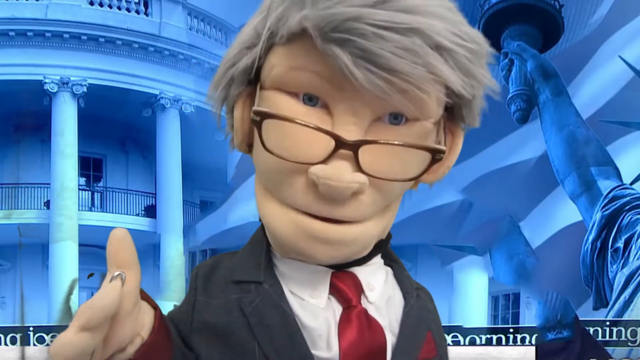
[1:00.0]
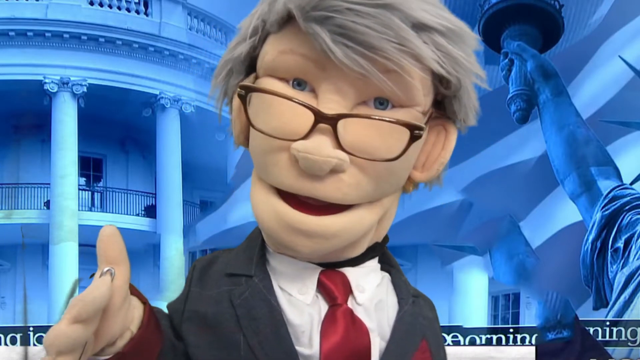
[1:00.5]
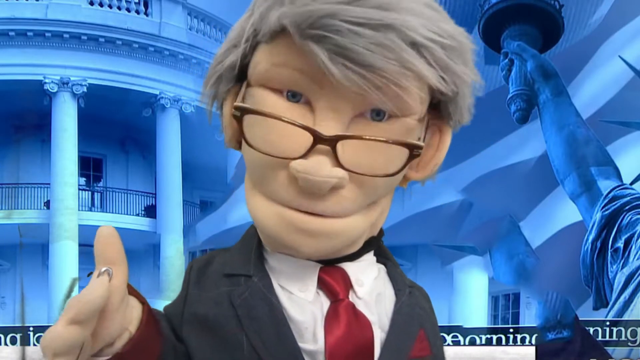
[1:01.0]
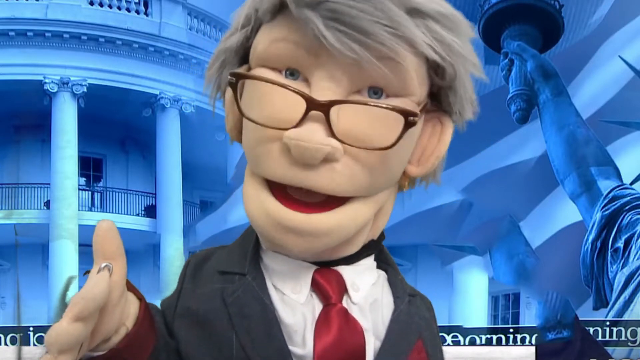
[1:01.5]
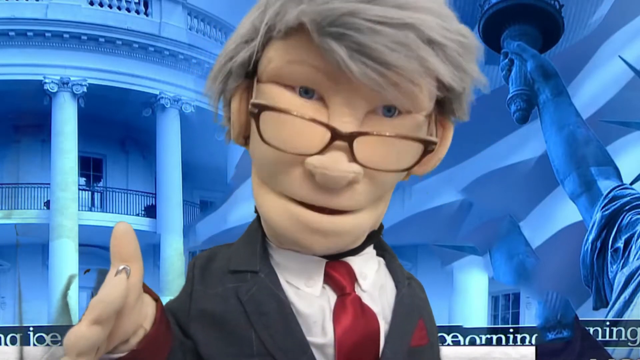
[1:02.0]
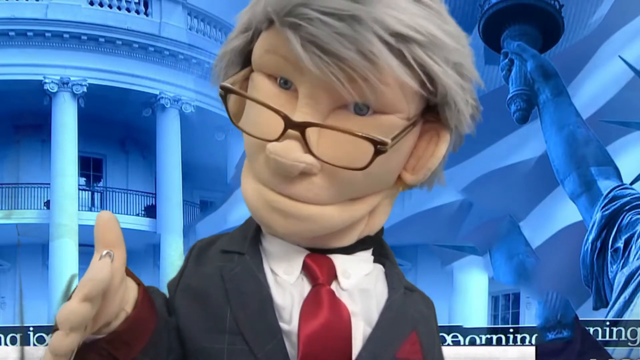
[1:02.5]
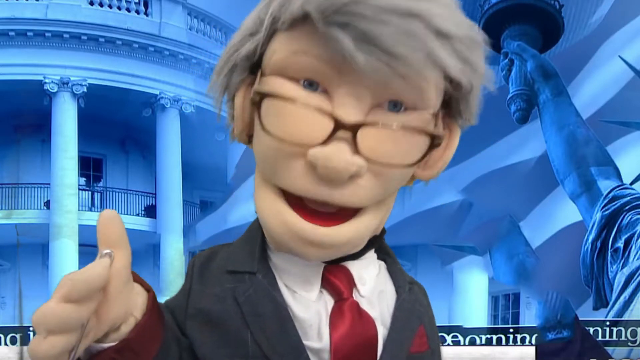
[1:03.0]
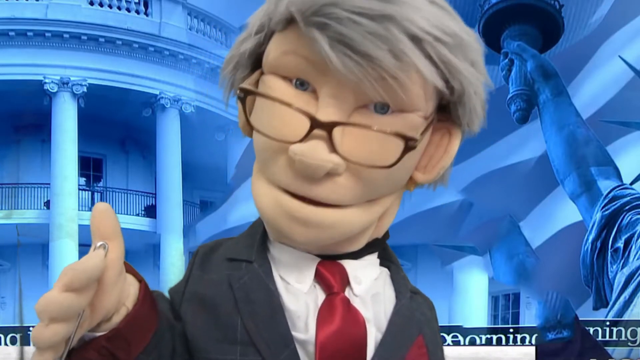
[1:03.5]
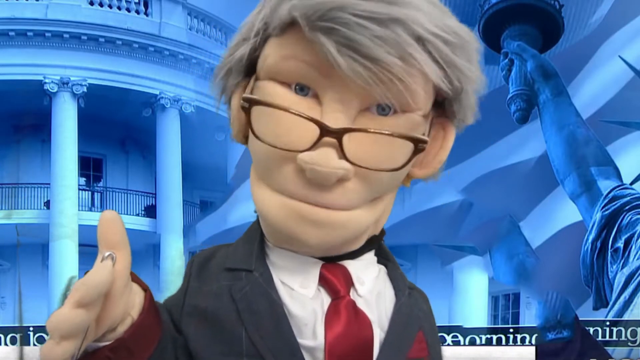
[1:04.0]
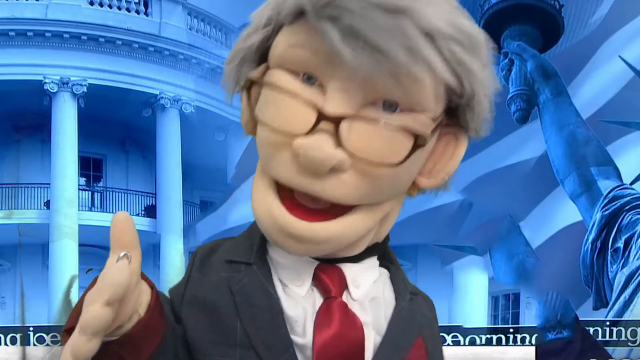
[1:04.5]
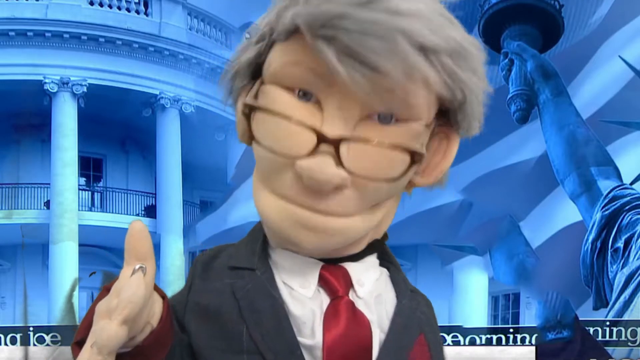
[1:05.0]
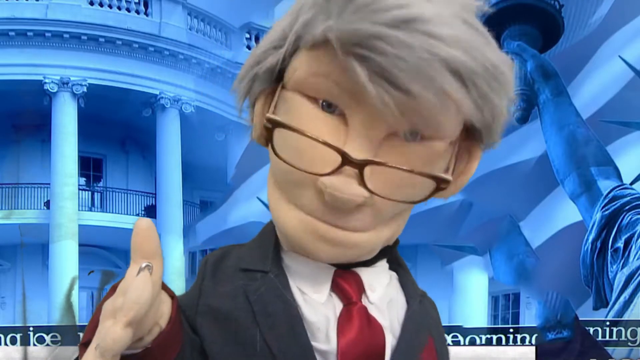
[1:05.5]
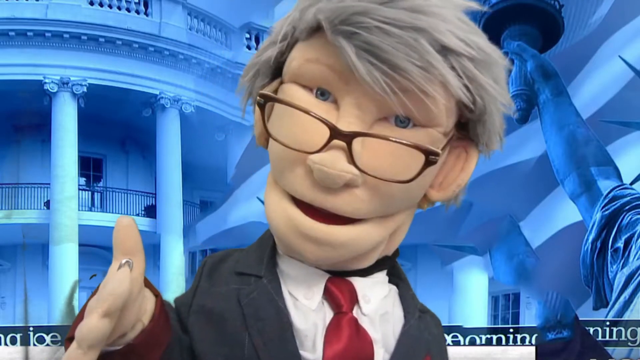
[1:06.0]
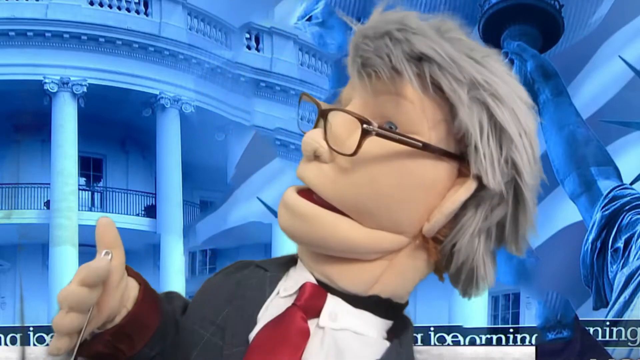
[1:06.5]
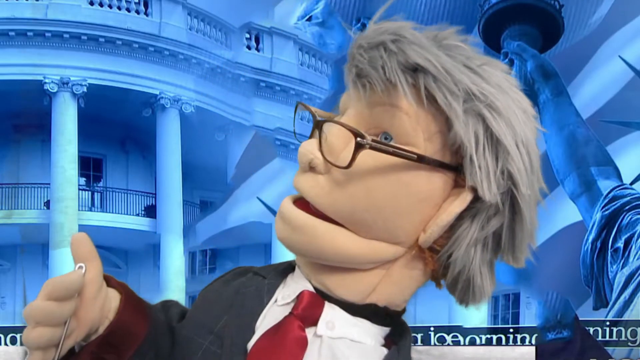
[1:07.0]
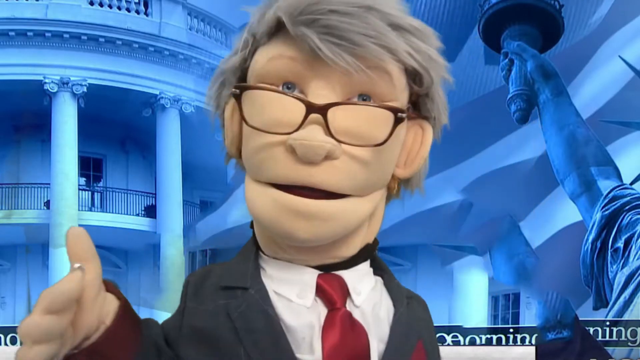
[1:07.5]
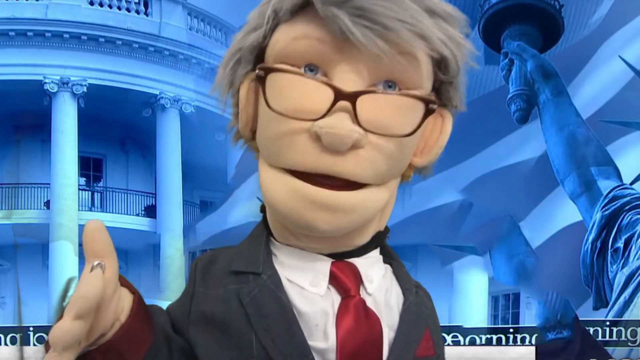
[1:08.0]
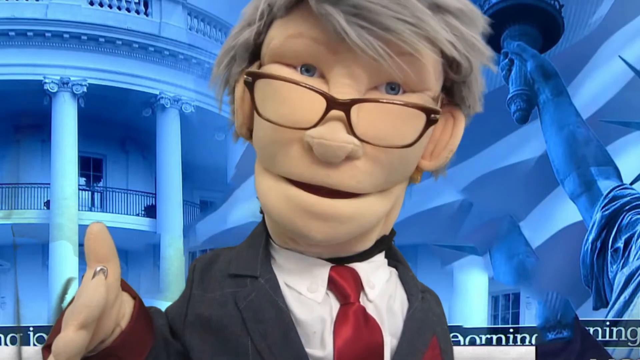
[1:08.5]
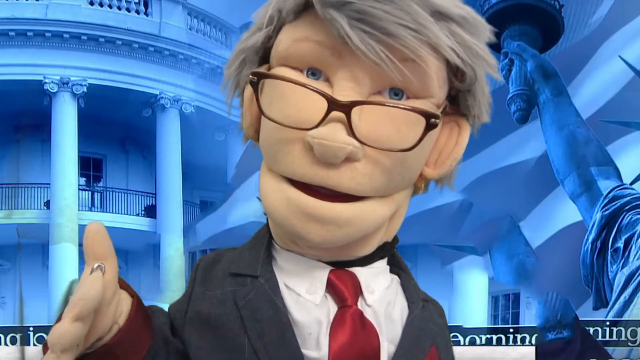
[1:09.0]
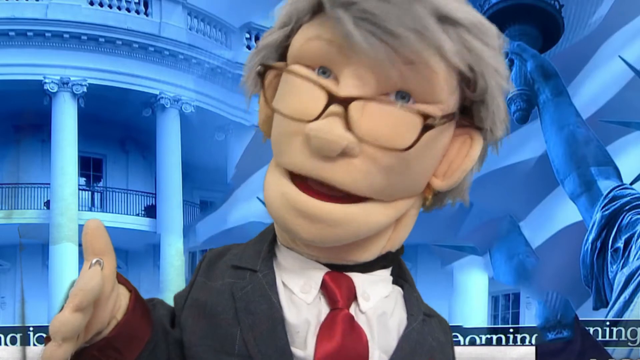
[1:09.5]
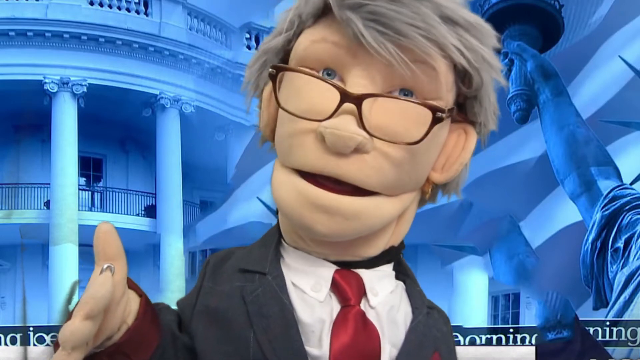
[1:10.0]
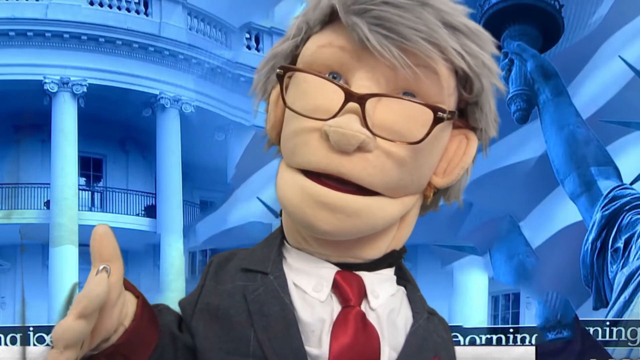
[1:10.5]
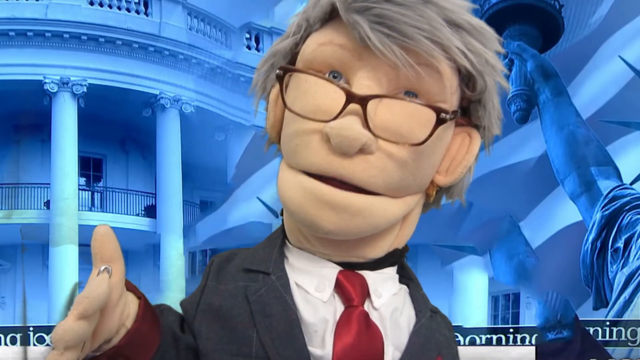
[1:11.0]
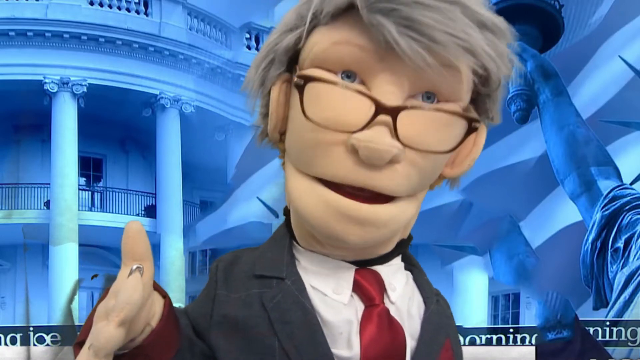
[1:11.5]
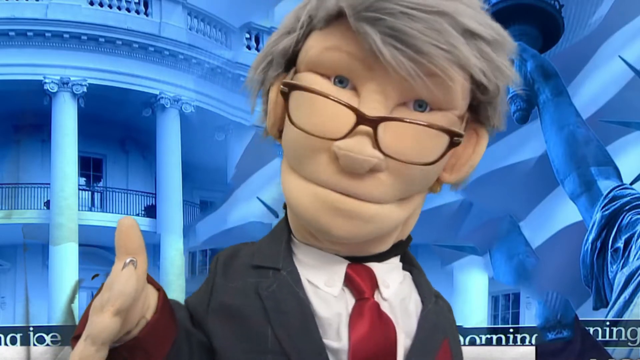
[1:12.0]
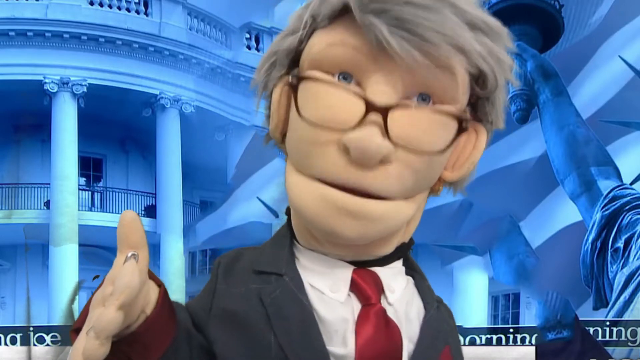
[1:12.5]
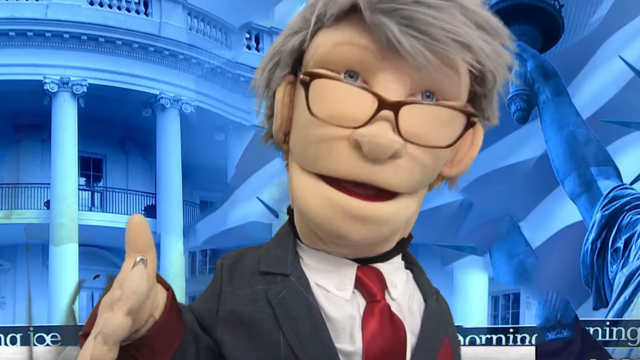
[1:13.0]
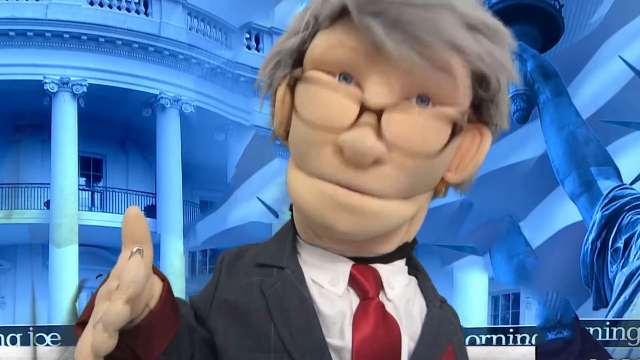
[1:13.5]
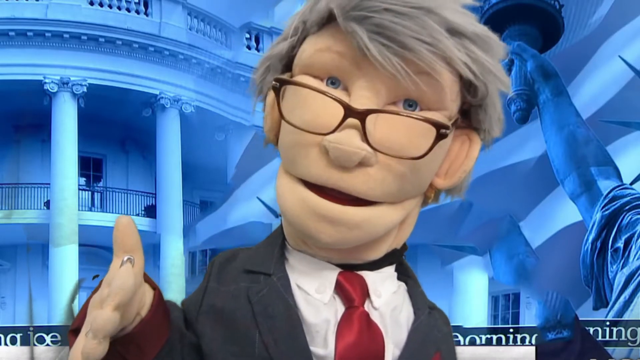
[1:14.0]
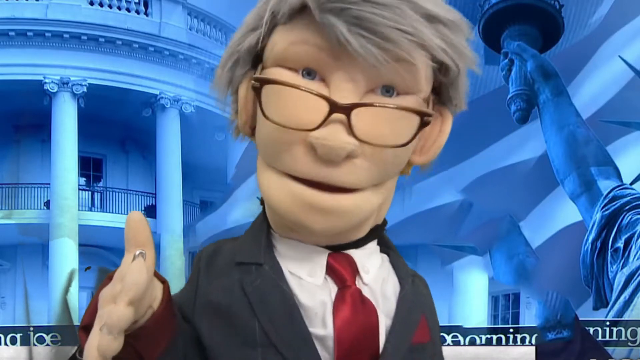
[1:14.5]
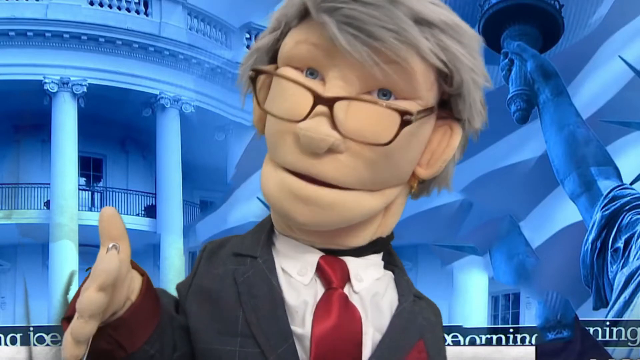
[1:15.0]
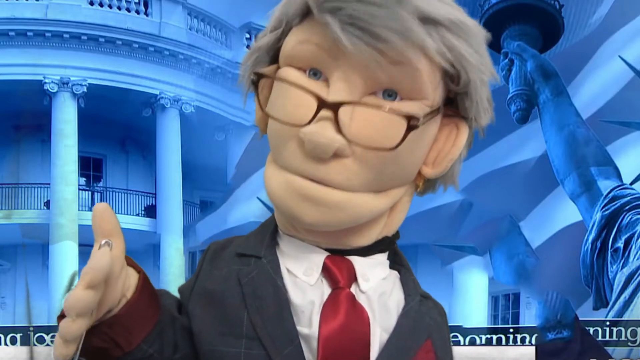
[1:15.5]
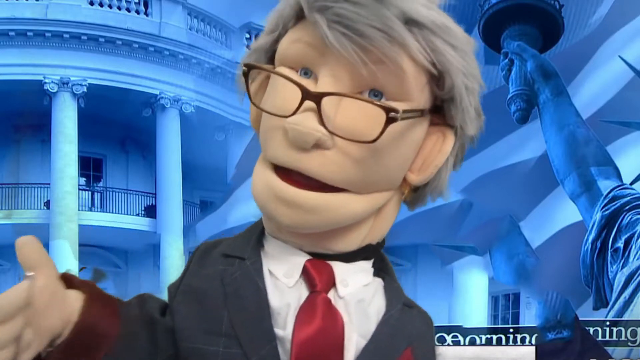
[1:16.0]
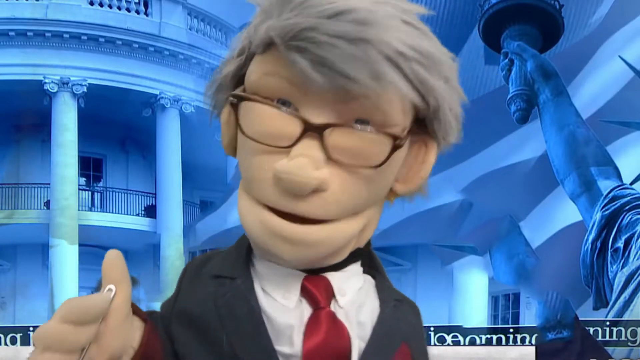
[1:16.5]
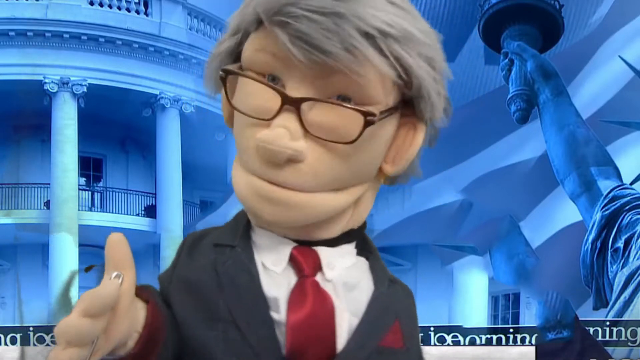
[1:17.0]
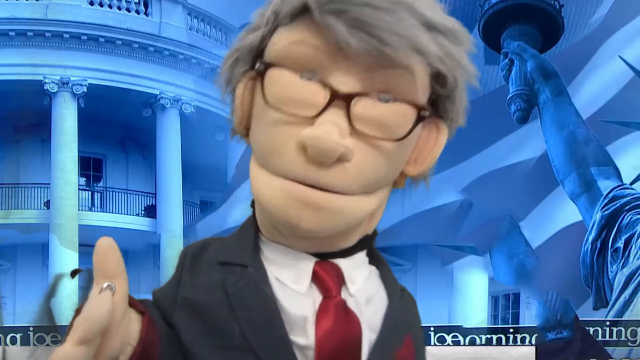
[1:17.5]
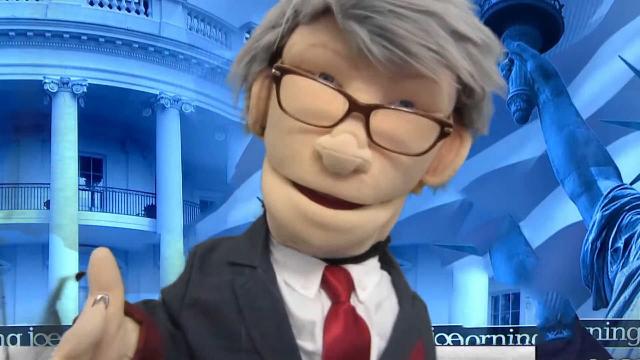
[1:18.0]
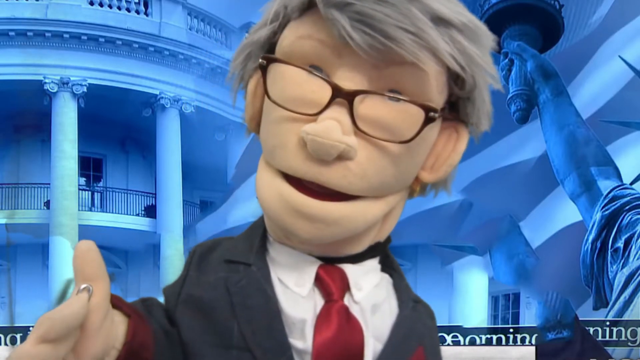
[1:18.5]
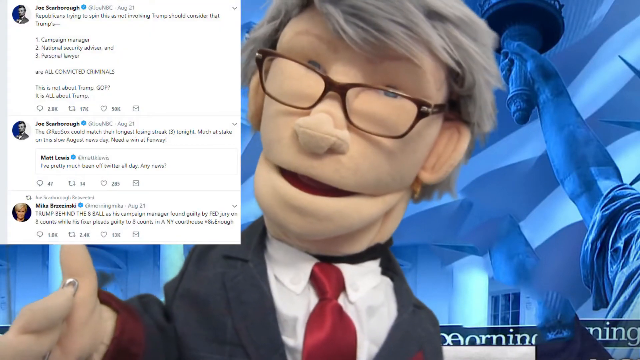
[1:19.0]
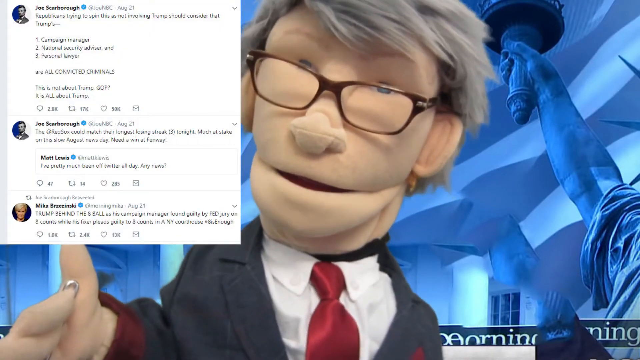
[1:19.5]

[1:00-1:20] The Muppet talks directly to the camera and looks in different directions. The Statue of Liberty is in the background. On the left-hand side of the screen is a comment section with many comments from different people. He wears a suit with a tie and looks formal and professional, and the setting appears to be a sort of news station.